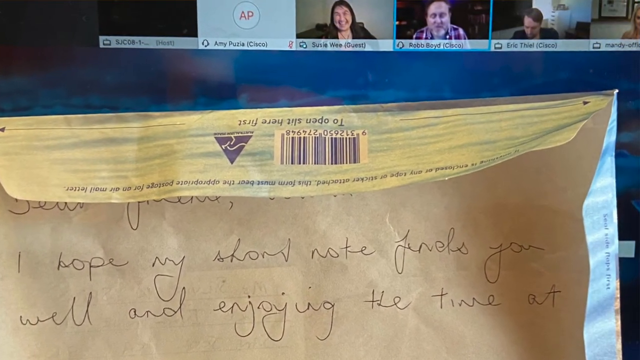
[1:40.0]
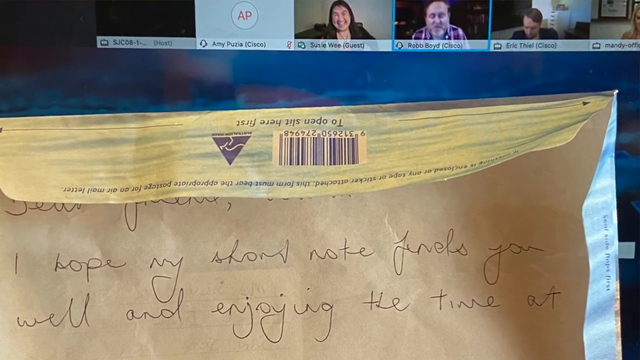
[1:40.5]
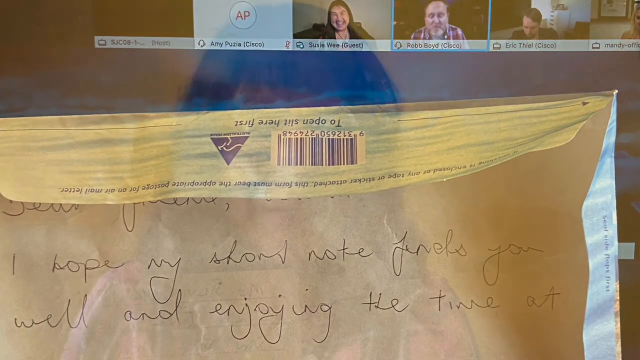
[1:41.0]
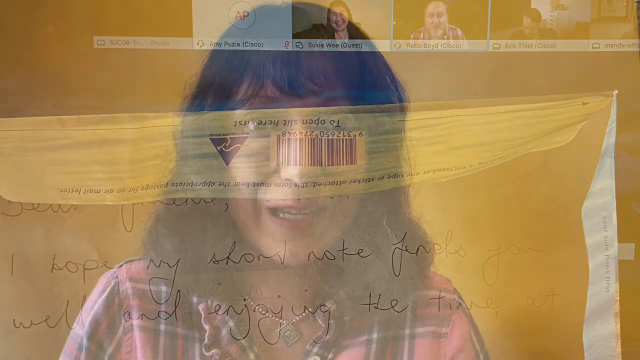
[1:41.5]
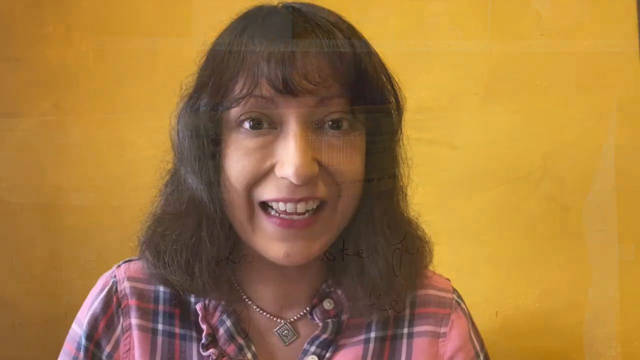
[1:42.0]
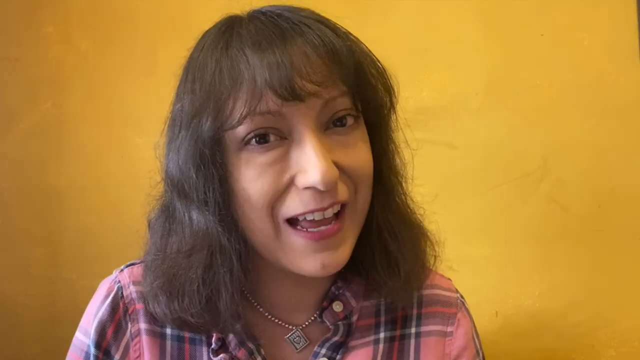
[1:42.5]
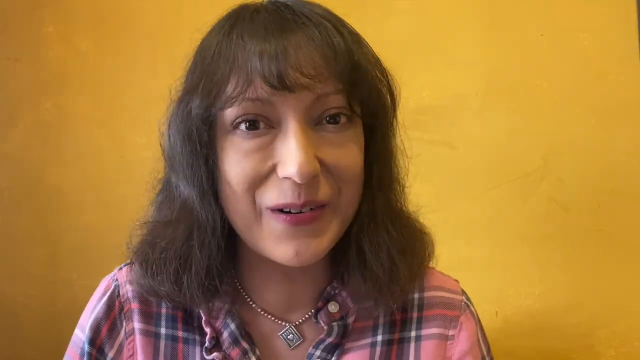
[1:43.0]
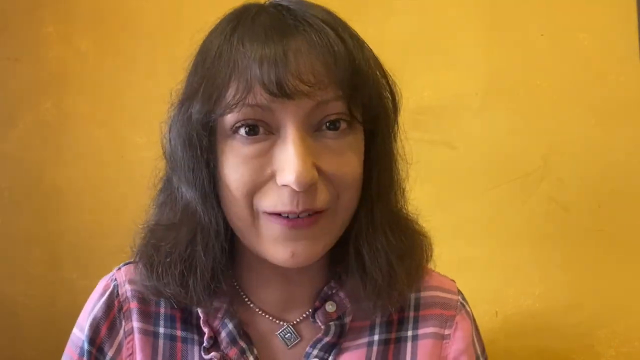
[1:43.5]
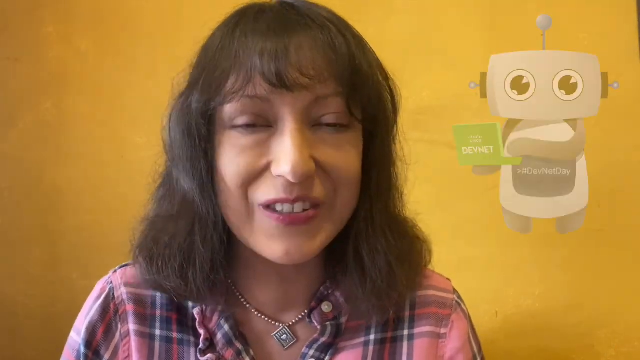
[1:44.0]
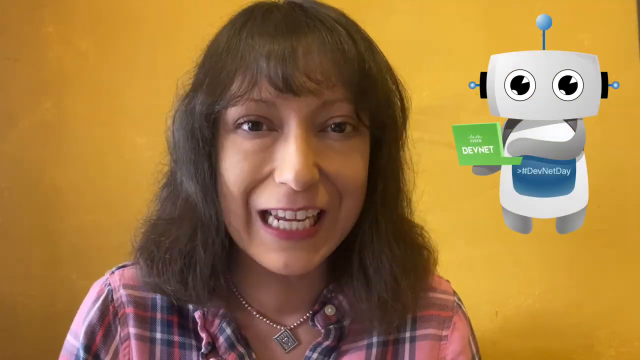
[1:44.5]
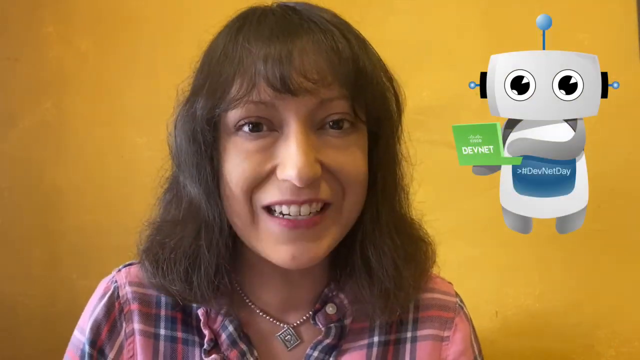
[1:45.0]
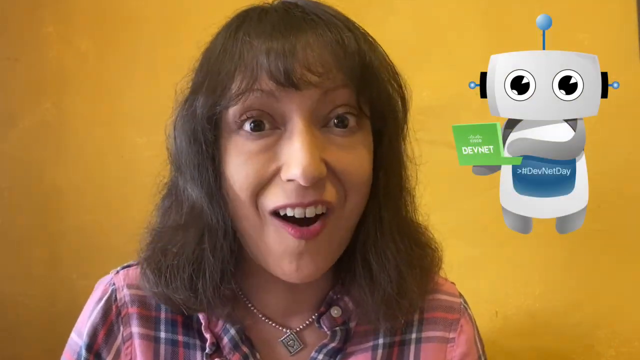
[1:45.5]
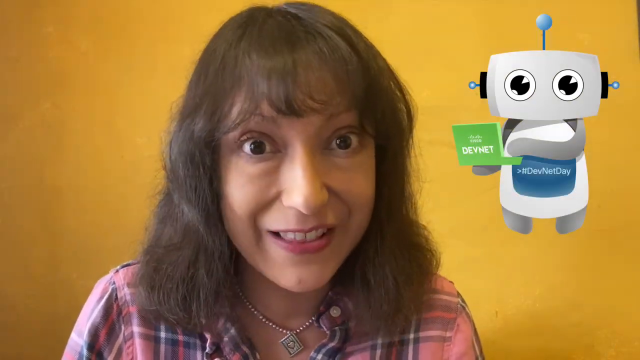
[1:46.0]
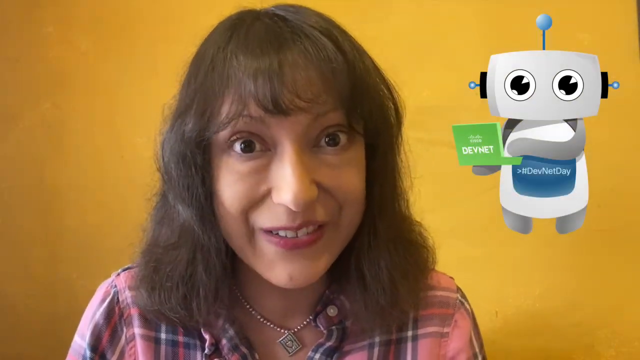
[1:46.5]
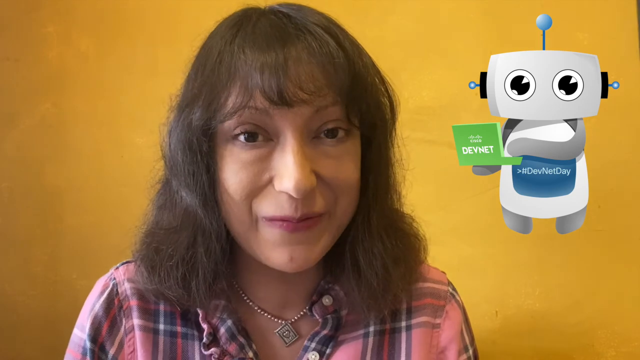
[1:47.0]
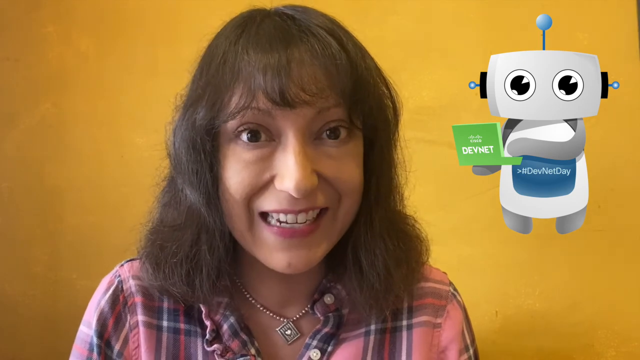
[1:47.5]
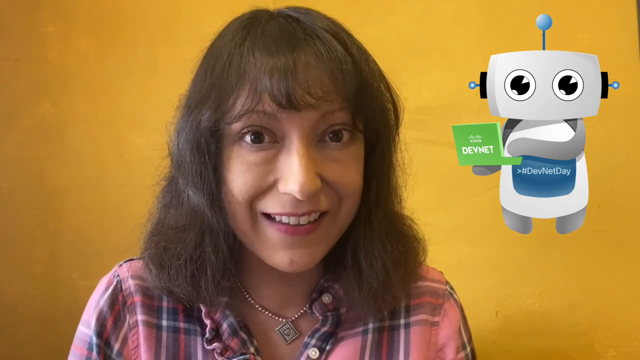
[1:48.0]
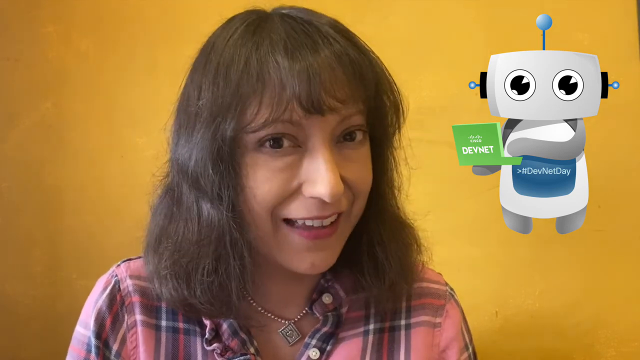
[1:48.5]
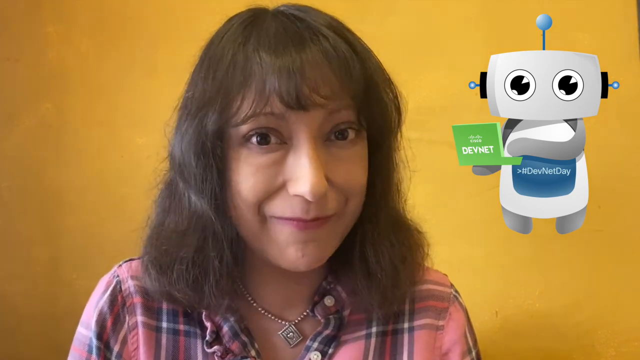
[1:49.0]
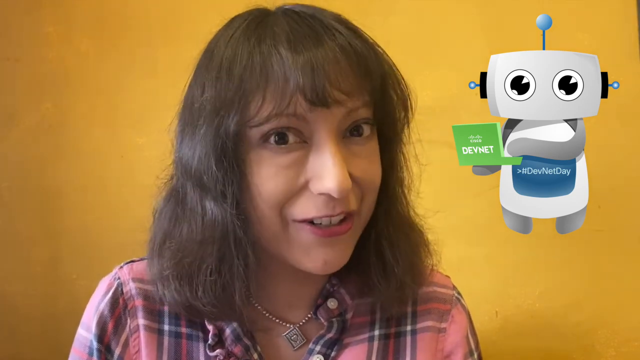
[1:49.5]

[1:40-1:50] A page shows an envelope with a half-circle flap coming down half an inch from the top, a barcode, and the note "I hope my short notes find you." In the top right corner are three people: a woman, a man, and another man looking down, with the letters "AP" beside them. The woman, who has long hair, is against a gold background and wears a checkered red top. The little robot appears in the right corner, holding its computer. The page with the envelope returns; the envelope is set at a slight angle rising from the left toward the right corner, about an eighth of an inch from the right side, and runs off the page on the left.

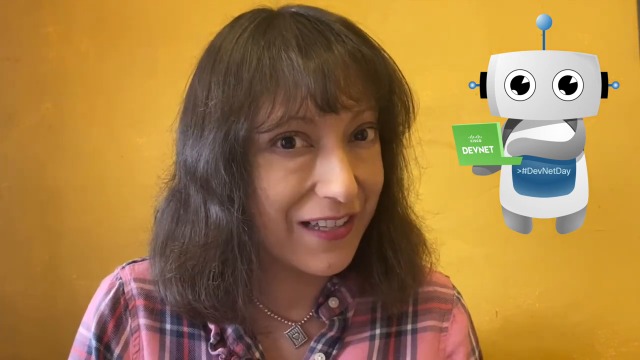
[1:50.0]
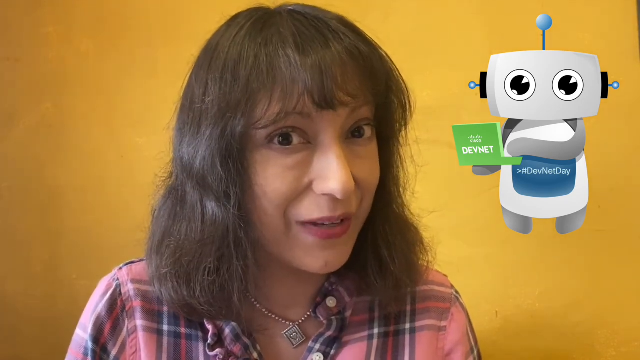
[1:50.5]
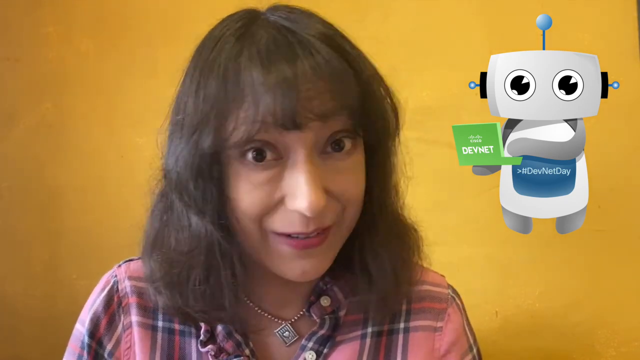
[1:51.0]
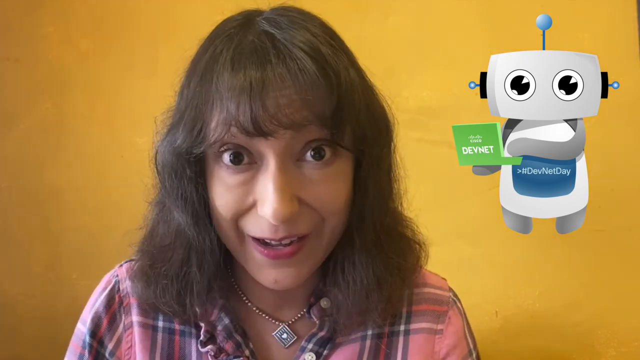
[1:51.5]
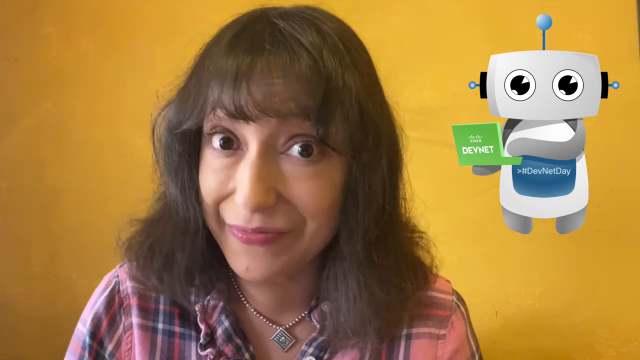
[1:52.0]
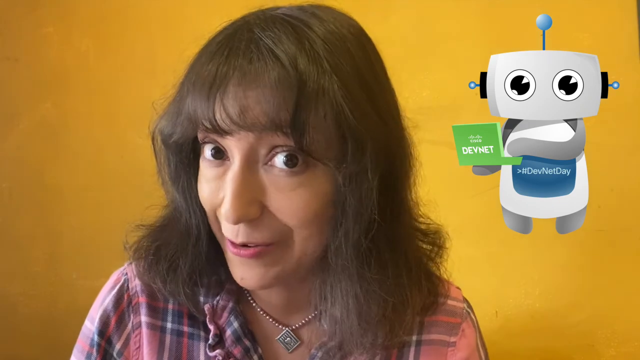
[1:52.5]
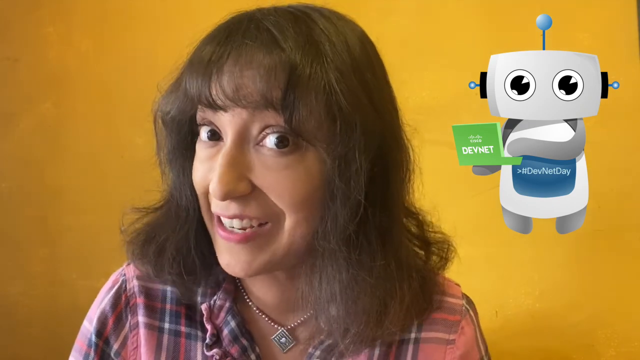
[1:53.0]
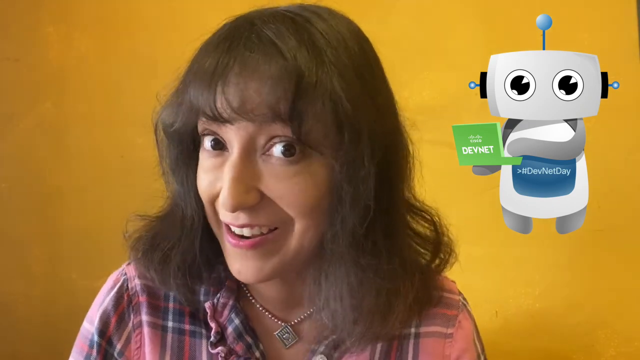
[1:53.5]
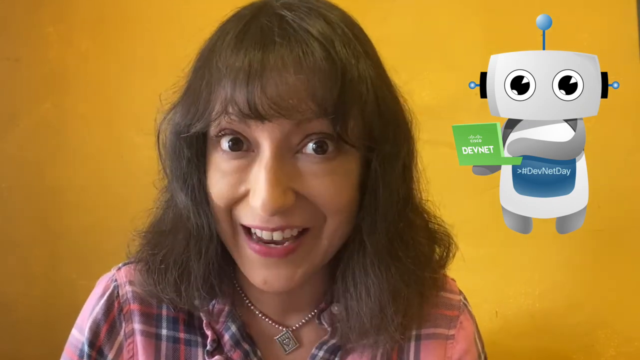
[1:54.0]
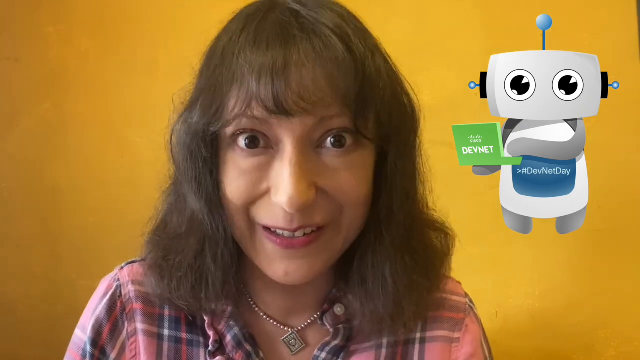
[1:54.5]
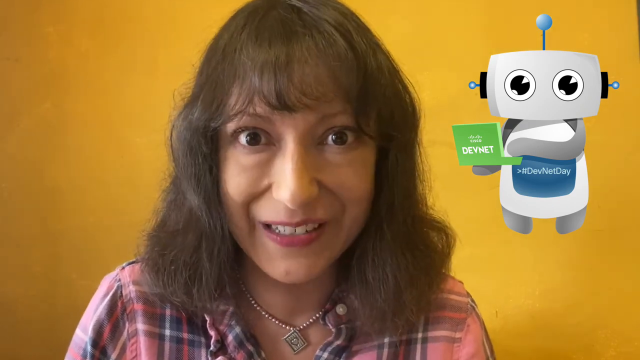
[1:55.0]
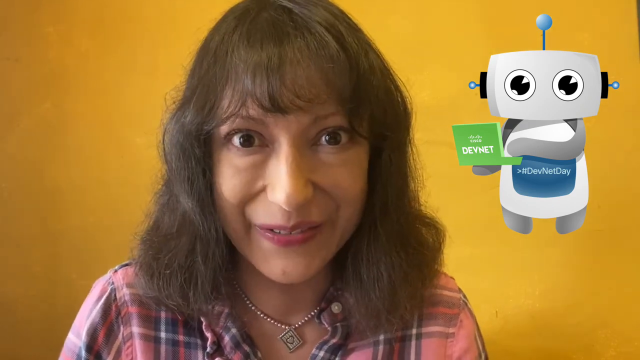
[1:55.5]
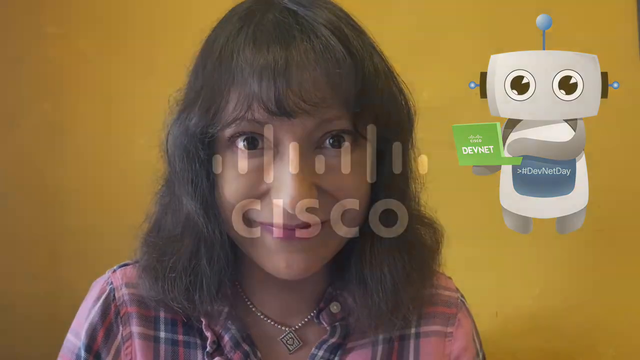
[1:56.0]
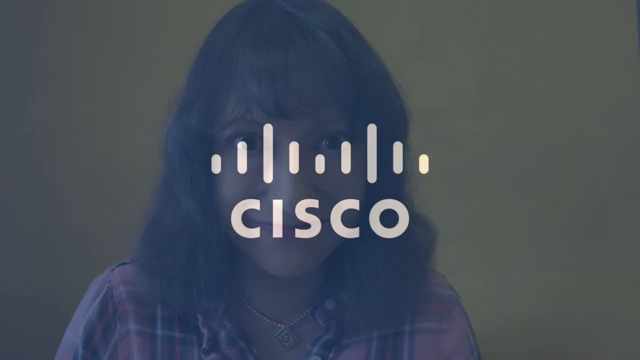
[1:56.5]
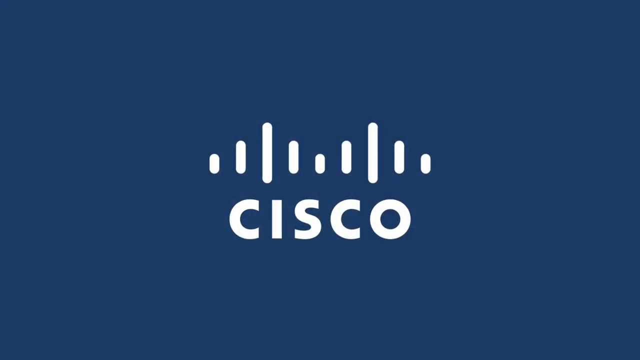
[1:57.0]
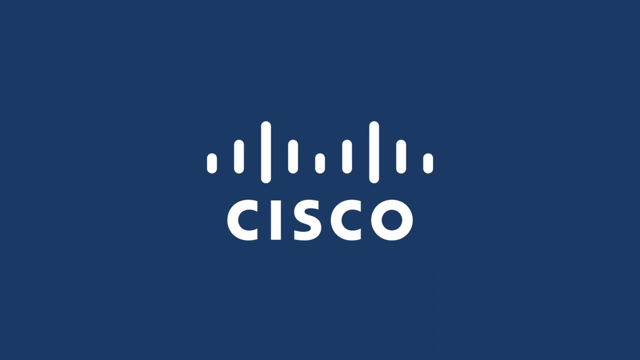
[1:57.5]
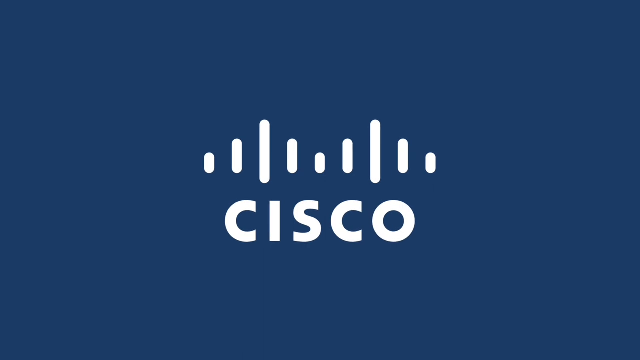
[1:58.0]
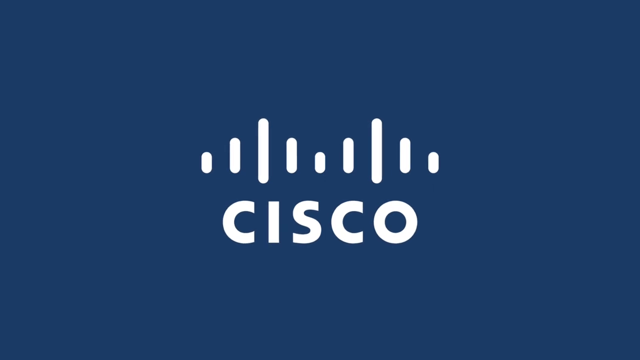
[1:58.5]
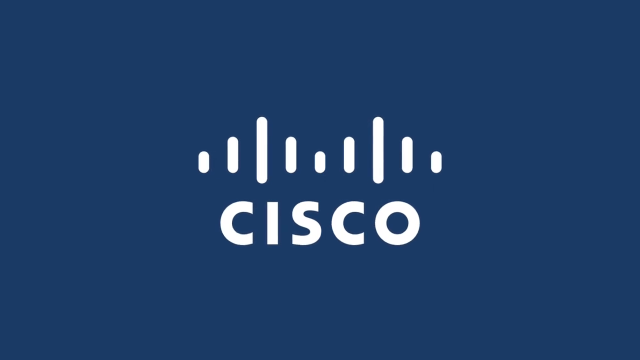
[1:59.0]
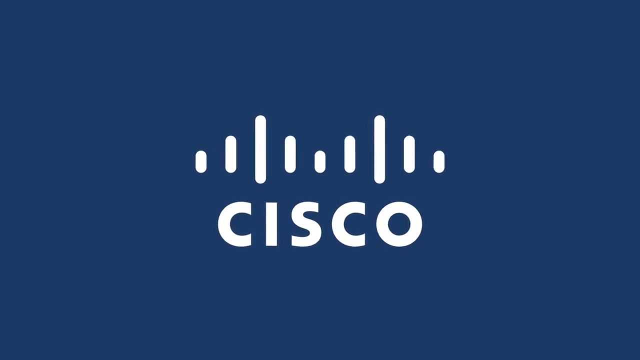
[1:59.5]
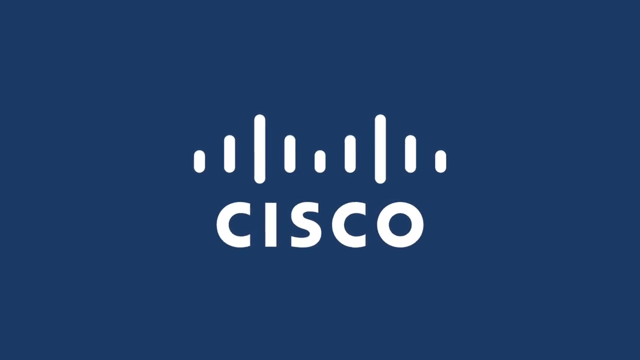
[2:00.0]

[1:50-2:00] A woman looks toward the camera, turns slightly to the left, turns her head straight, and then turns it slightly to the right. The little robot, with a head and a body, is in the top right corner while she is on screen. Then the word "CISCO" appears in white letters on a navy blue background that is darker toward the bottom of the screen. Above the letters are multiple lines of varying heights: two short lines rising to a longer line, falling back to two small lines, rising again, with larger lines beside them, then falling back down by two lines.